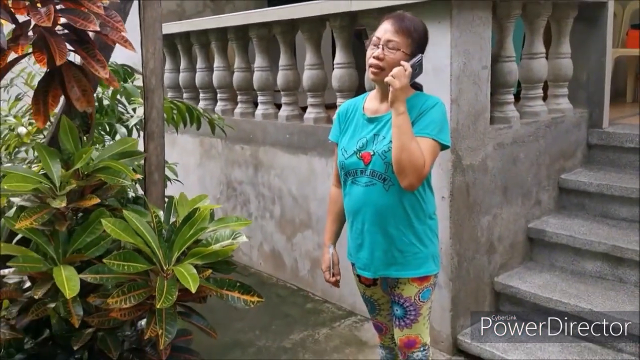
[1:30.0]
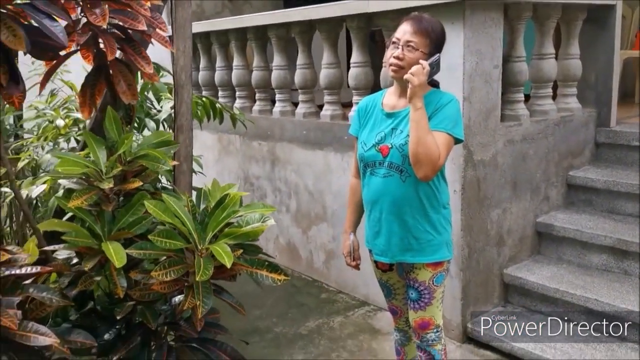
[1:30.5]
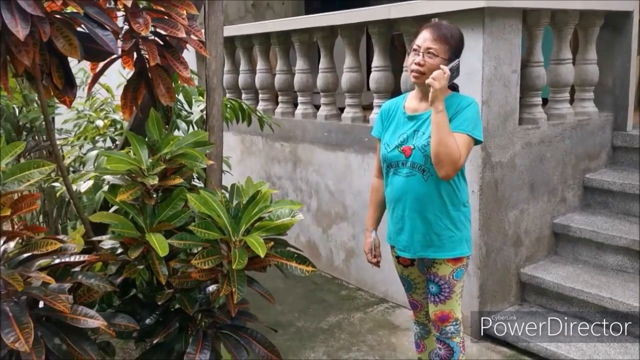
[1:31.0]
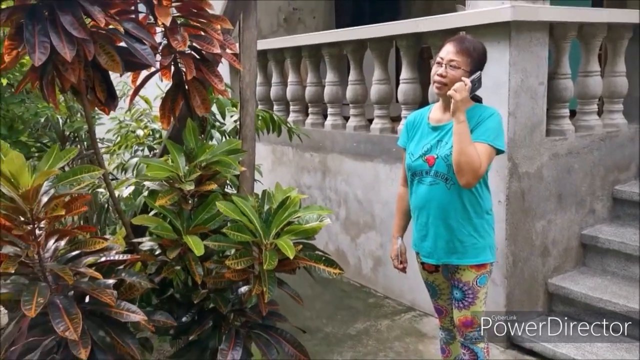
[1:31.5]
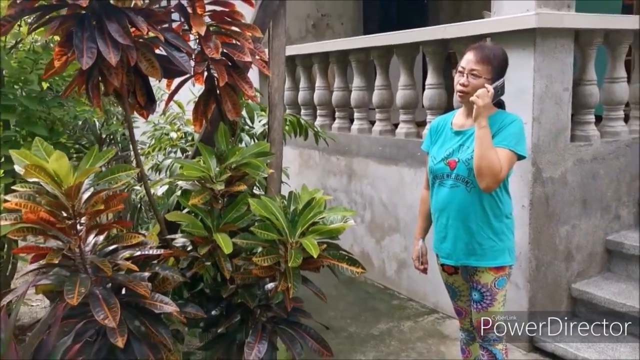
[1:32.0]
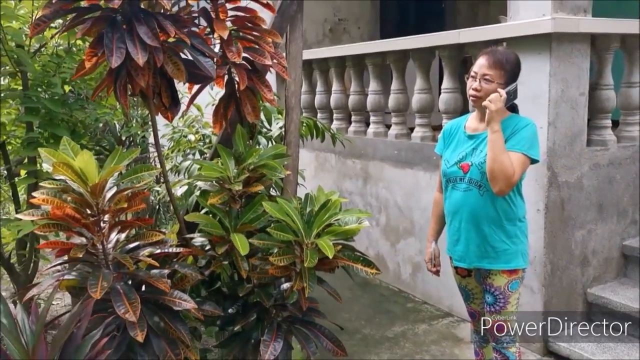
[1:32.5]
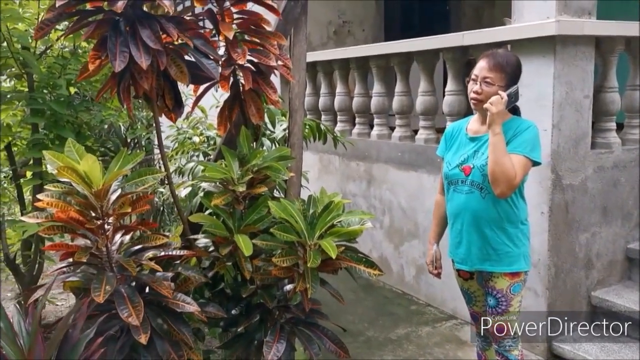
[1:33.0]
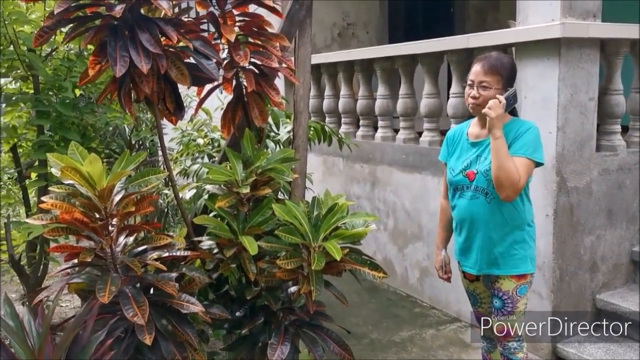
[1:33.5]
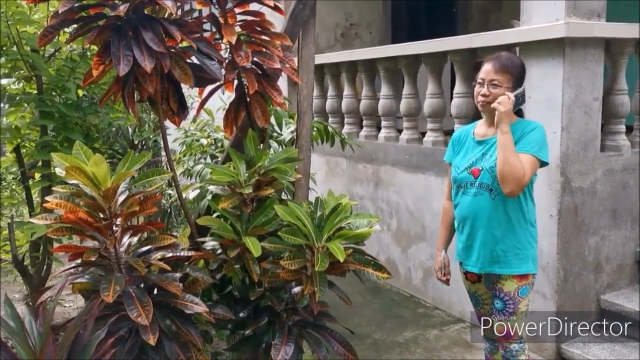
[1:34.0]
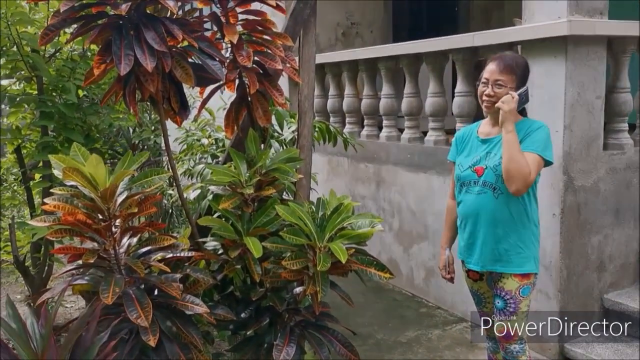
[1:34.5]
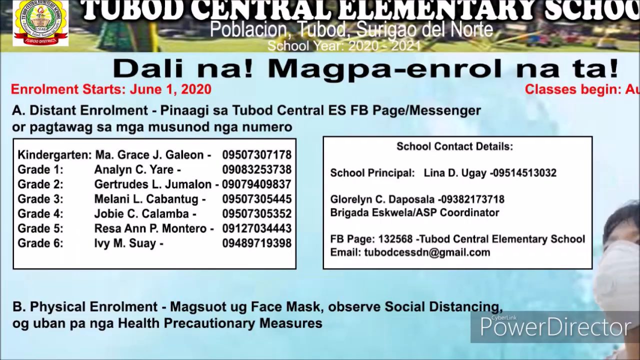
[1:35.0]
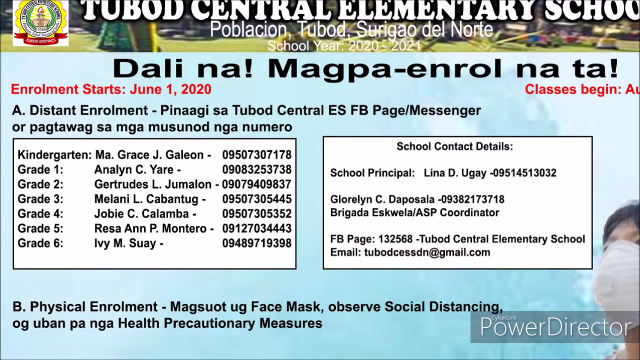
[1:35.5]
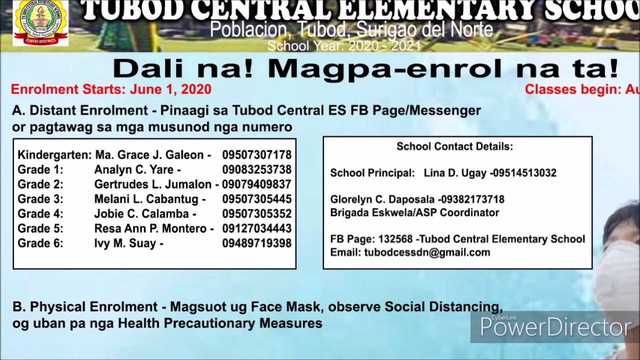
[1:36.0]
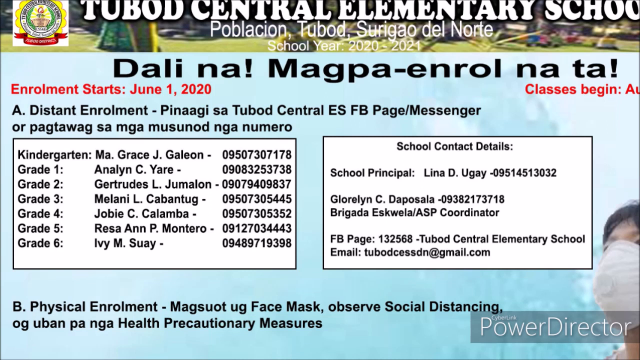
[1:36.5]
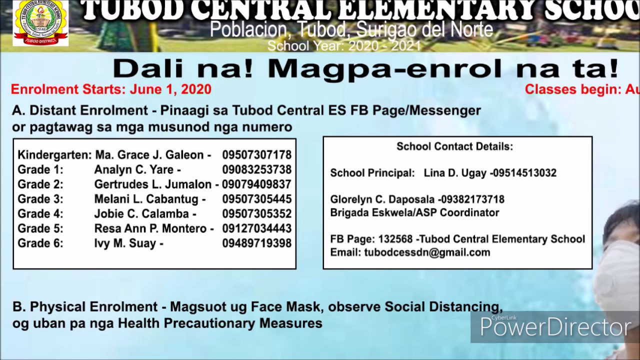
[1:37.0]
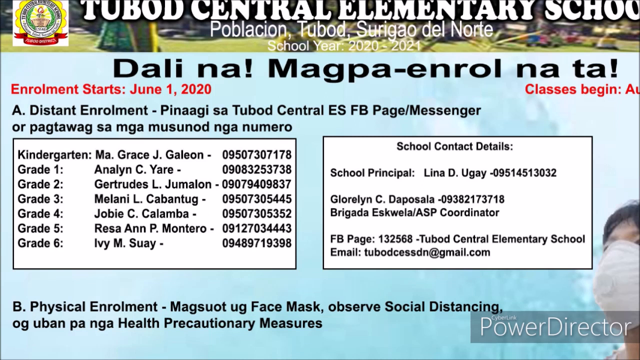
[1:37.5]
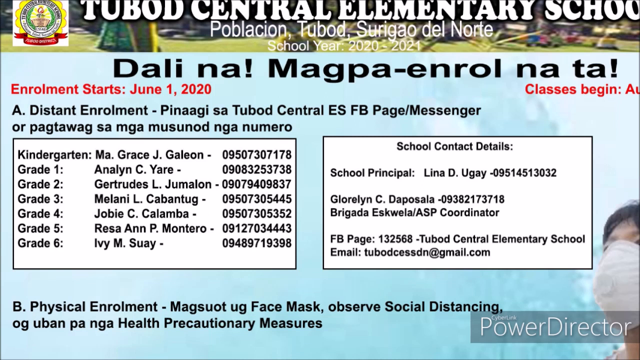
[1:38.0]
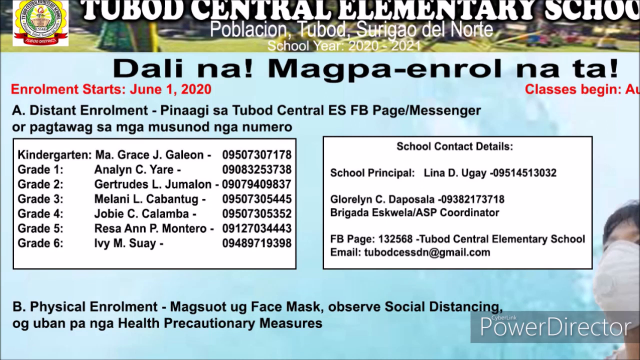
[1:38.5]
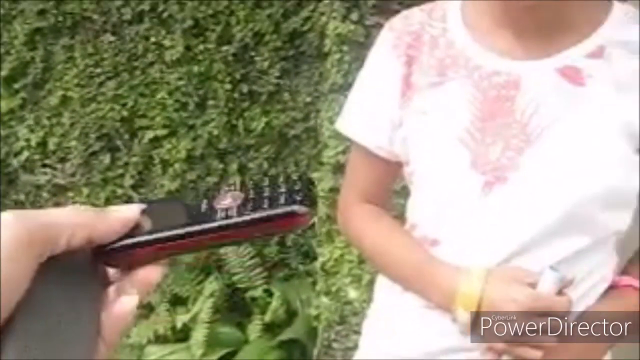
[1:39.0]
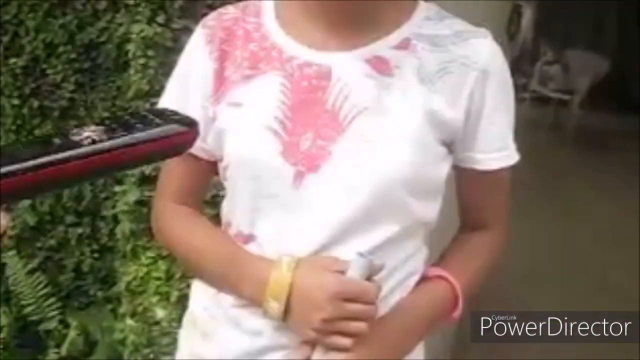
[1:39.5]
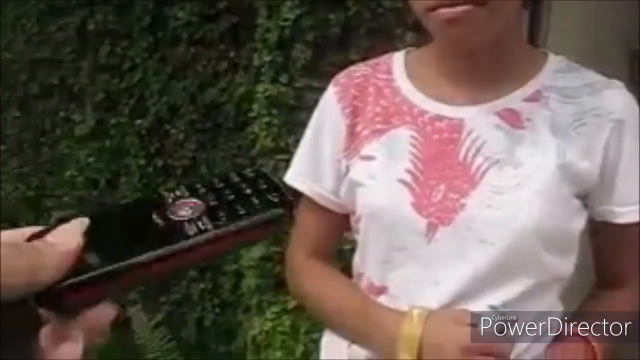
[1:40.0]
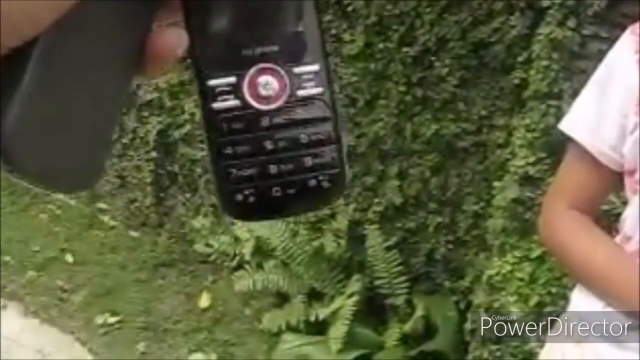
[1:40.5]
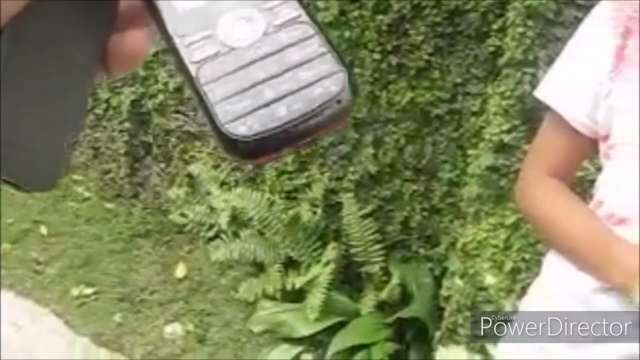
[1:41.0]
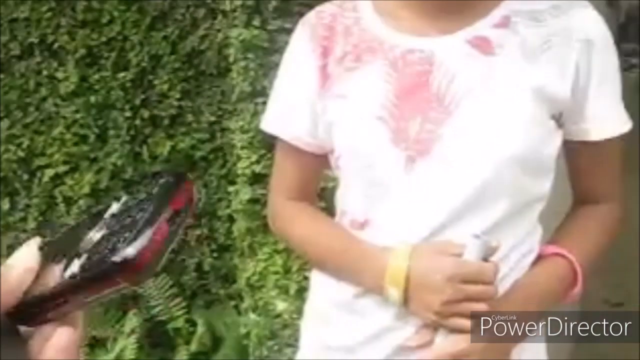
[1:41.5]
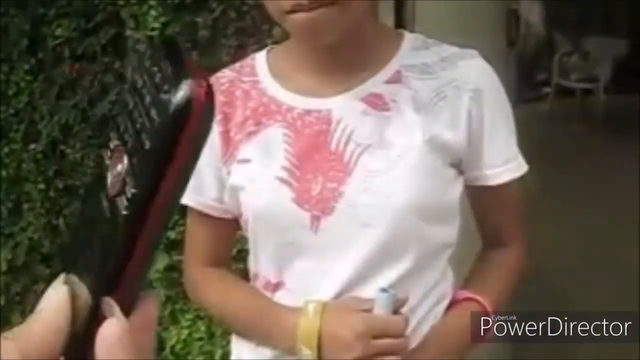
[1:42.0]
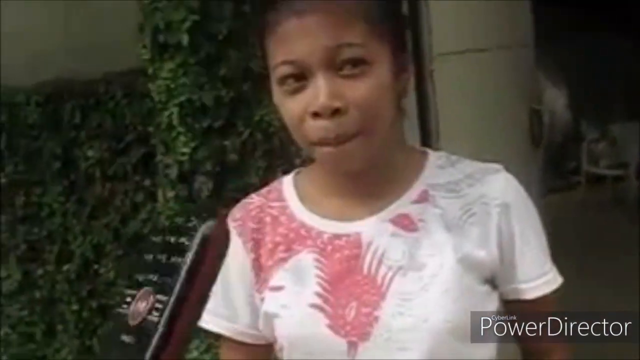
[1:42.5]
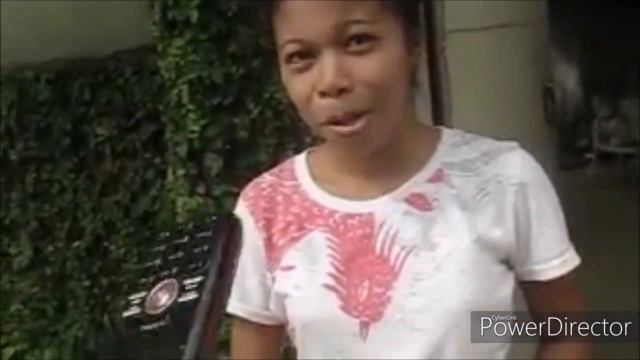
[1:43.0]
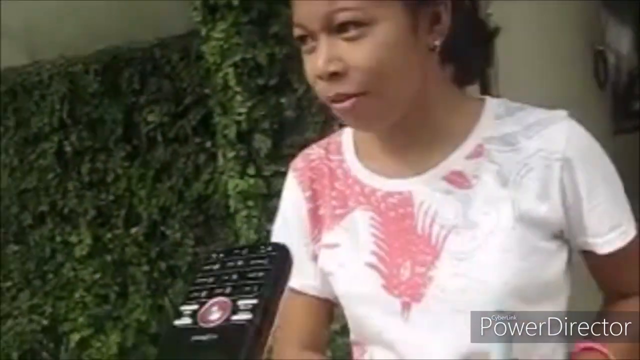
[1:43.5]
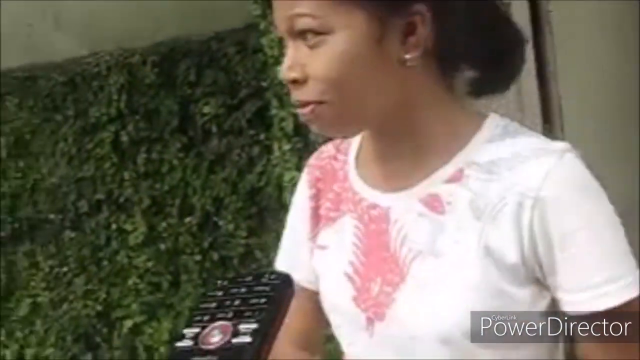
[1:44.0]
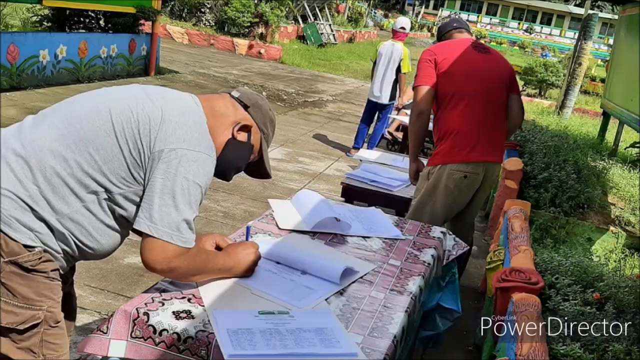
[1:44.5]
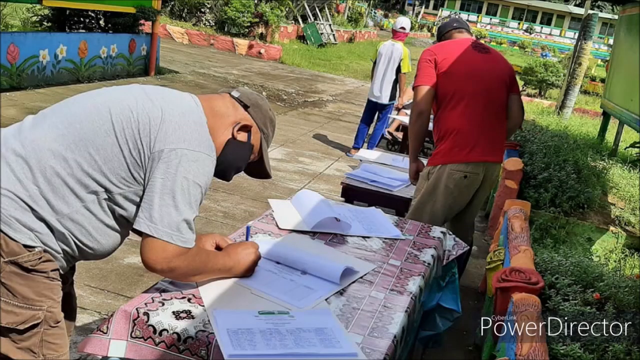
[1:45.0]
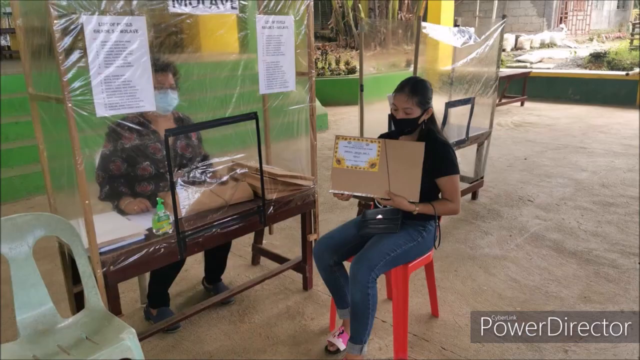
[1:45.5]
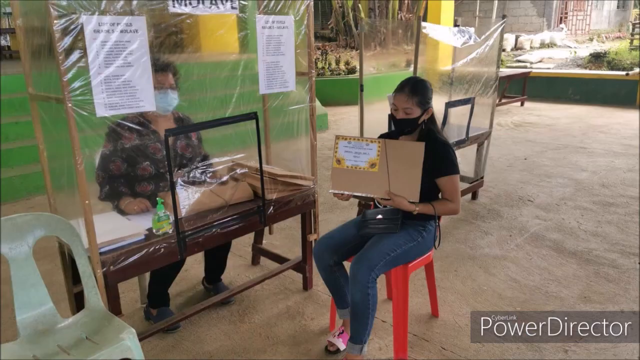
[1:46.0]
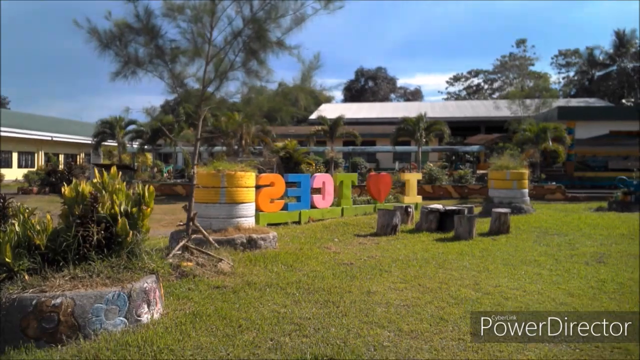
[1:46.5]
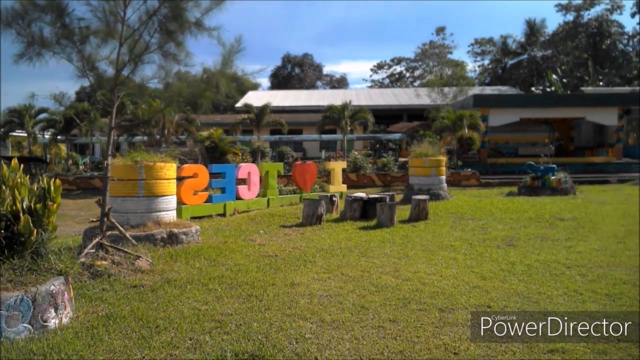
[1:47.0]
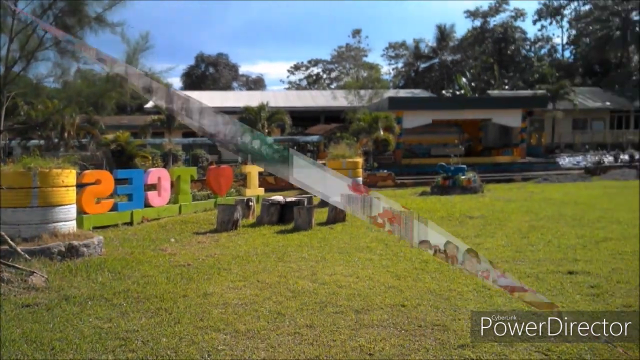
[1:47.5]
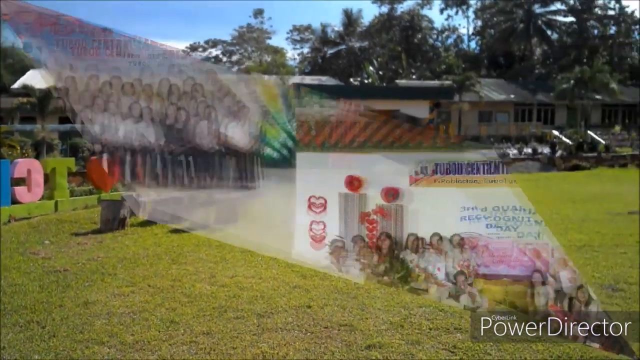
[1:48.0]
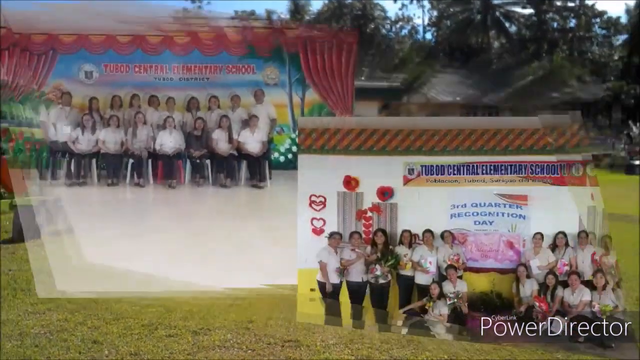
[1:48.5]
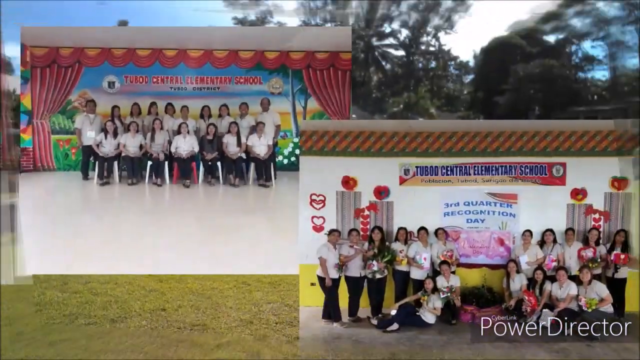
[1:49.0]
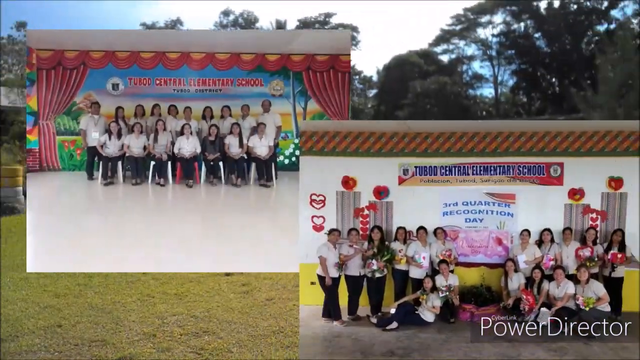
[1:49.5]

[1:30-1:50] A lady in a blue shirt and colorful flower leggings stands in front of a porch near a tree, talking on her cell phone. Text then appears on the screen about distant enrollment for the school; it seems people can sign up for the school and then receive their learning materials in an envelope. There is contact information for the school as well as a list of teachers and their contact information. The text apparently states that physical enrollment requires wearing a face mask and observing social distancing, and that distant enrollment can be done via Facebook Messenger, with what looks like another option written in another language. Next, somebody hands a young girl a red cell phone; the girl looks excited but a little bit confused, and she turns her head and nods. People are then shown signing papers at a table, and finally two photos of the school employees are shown.